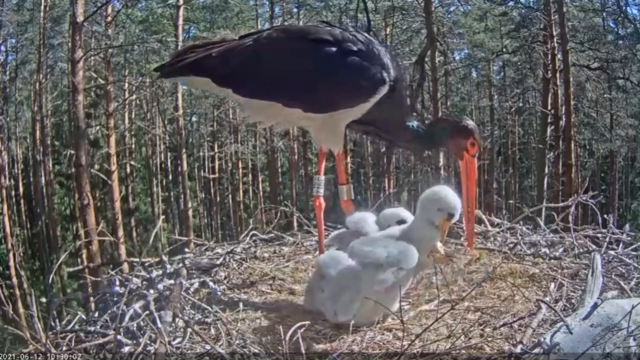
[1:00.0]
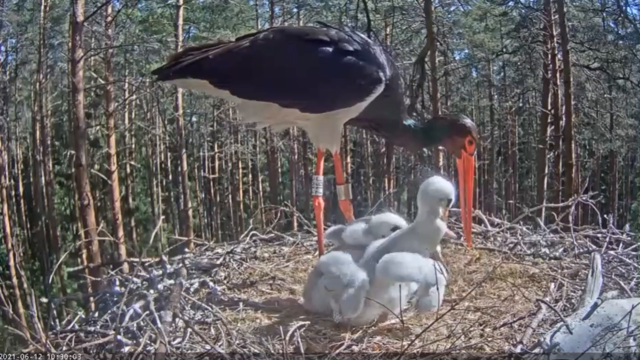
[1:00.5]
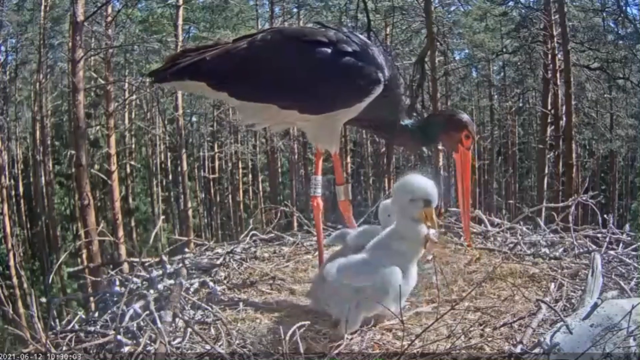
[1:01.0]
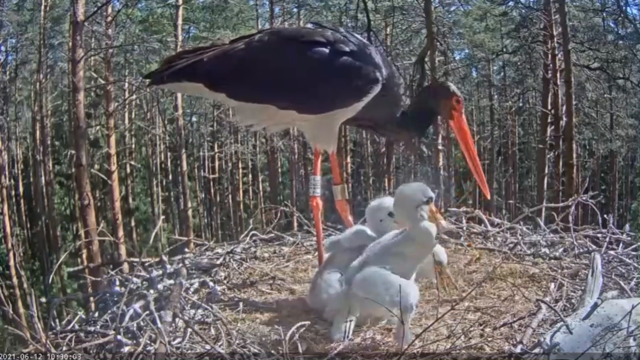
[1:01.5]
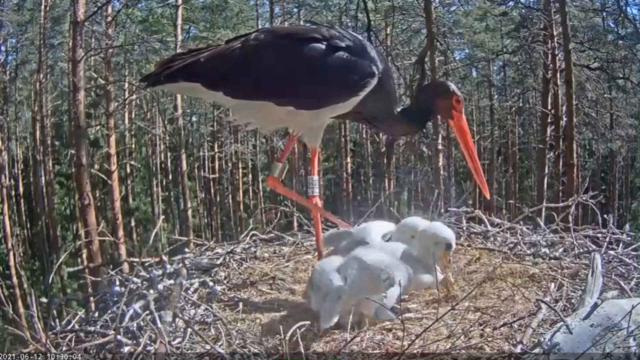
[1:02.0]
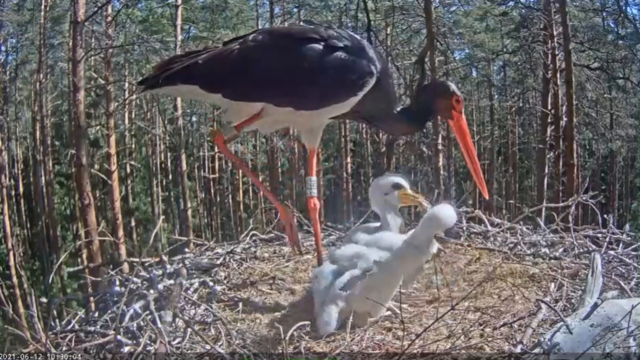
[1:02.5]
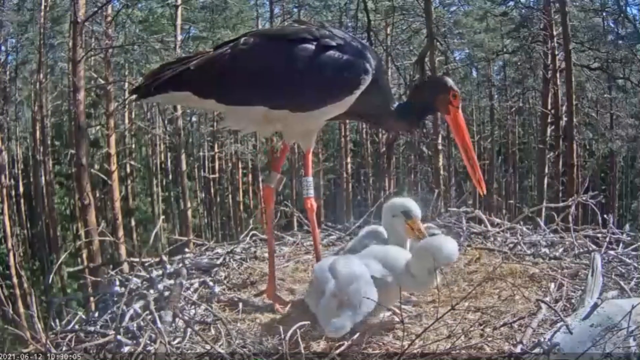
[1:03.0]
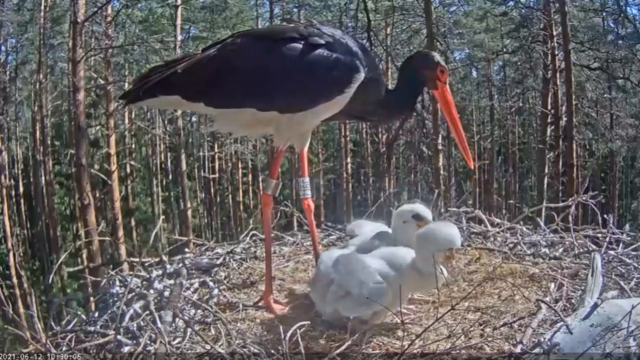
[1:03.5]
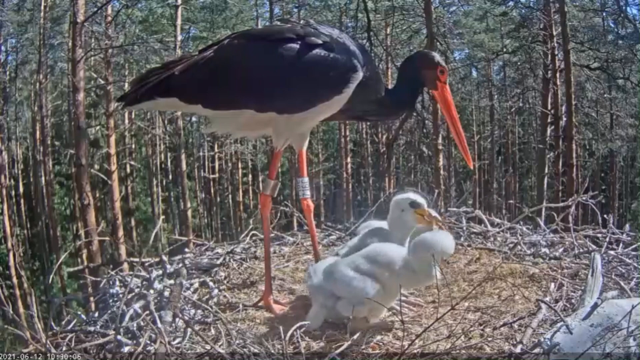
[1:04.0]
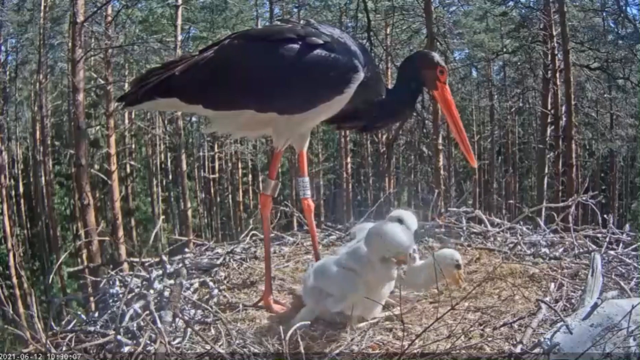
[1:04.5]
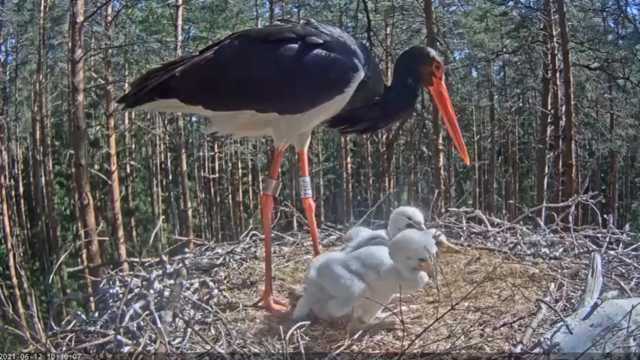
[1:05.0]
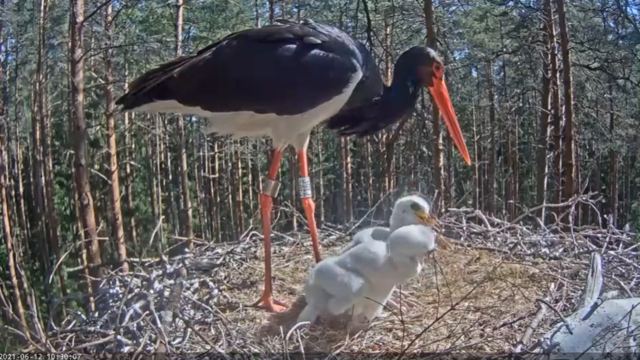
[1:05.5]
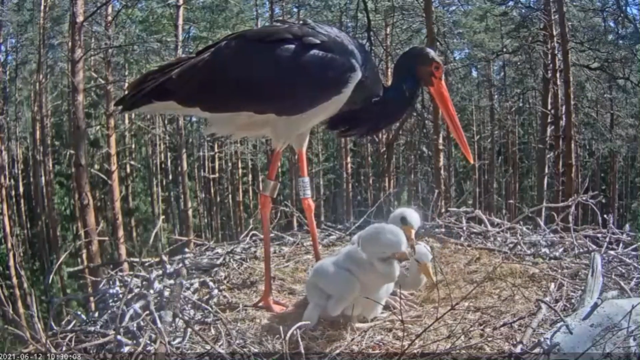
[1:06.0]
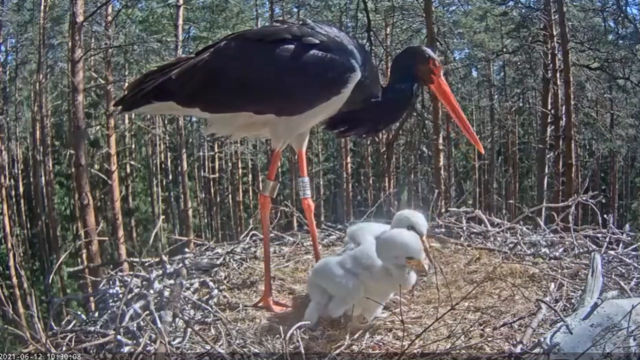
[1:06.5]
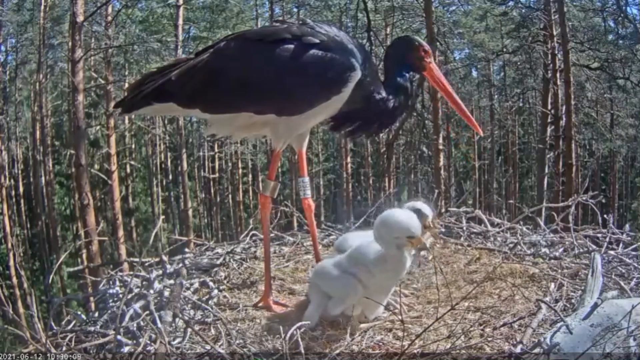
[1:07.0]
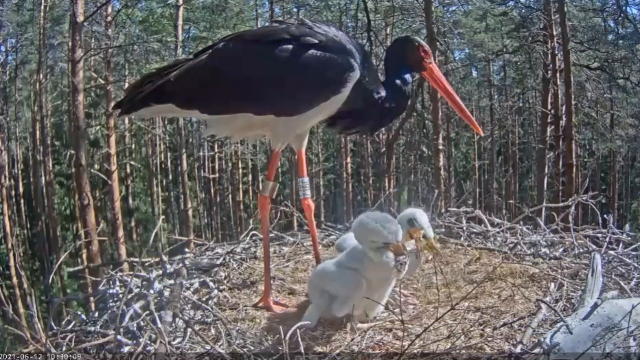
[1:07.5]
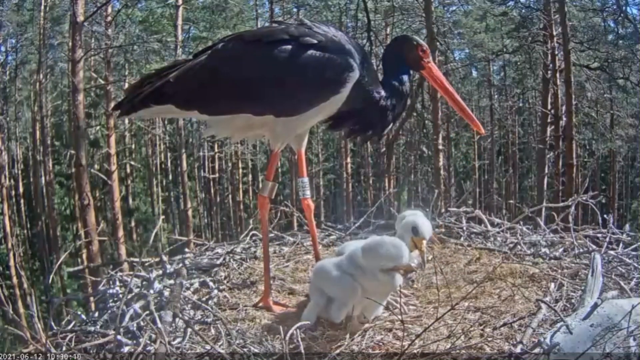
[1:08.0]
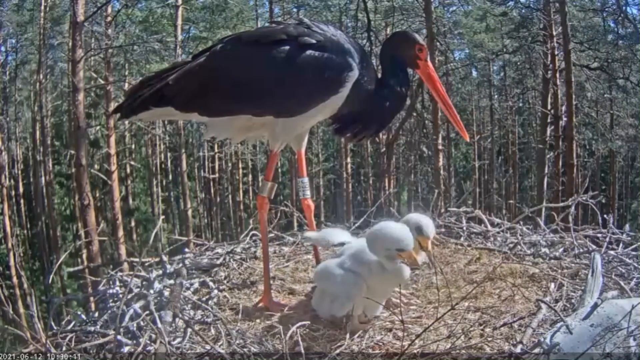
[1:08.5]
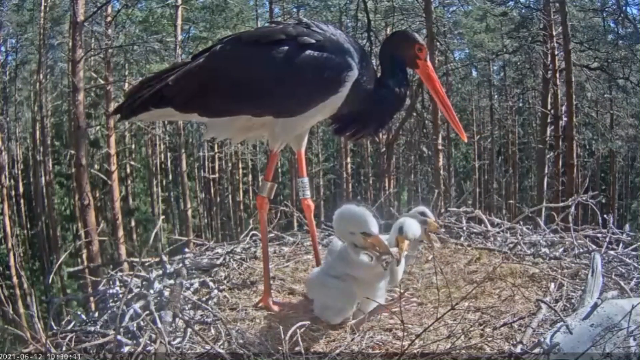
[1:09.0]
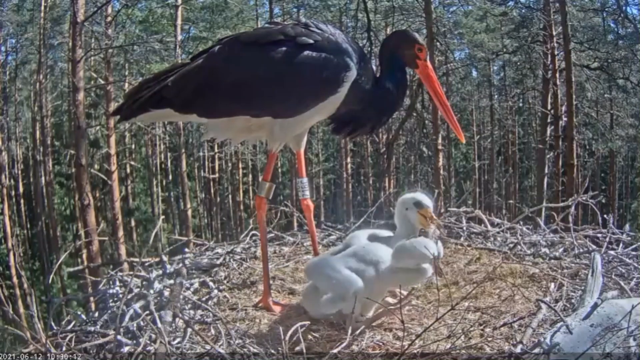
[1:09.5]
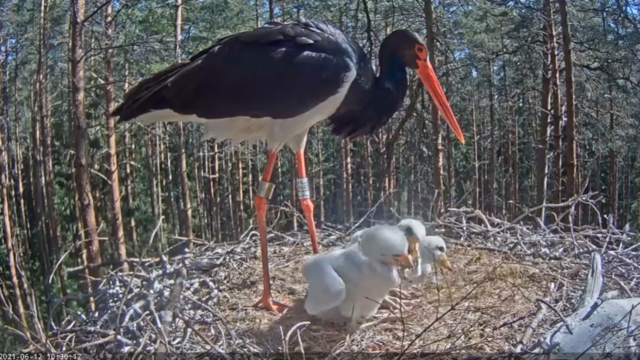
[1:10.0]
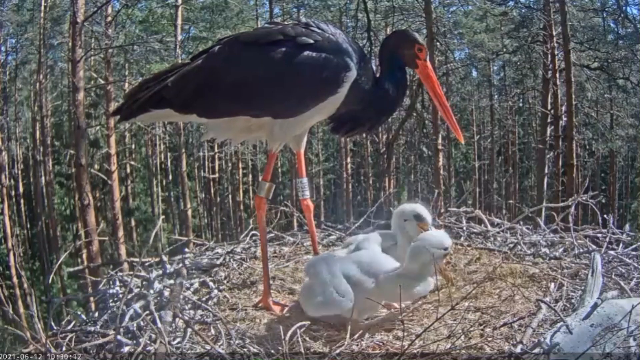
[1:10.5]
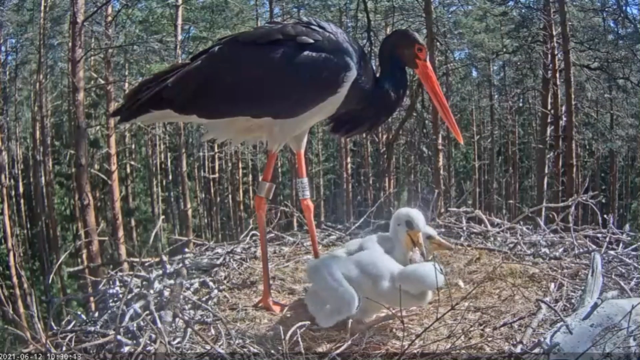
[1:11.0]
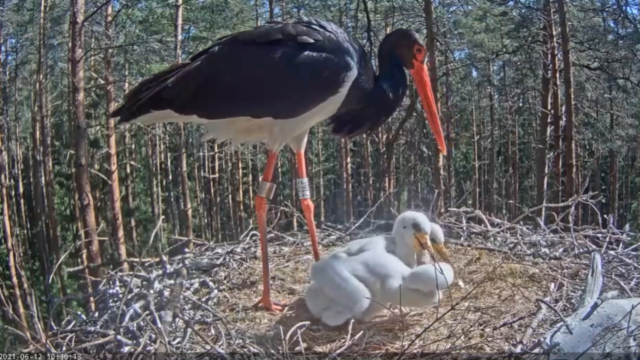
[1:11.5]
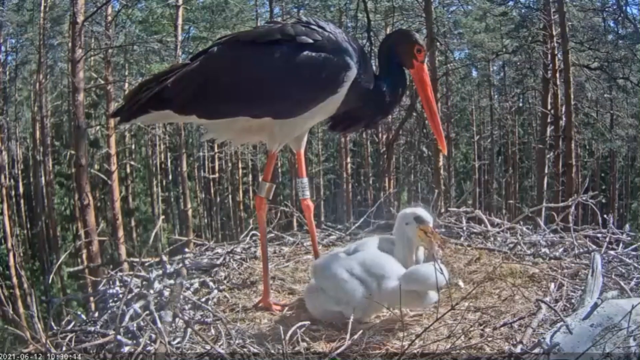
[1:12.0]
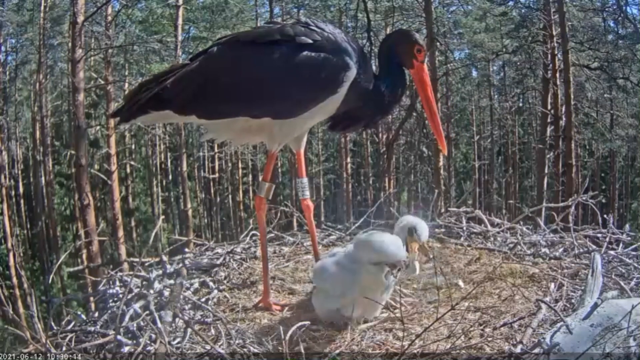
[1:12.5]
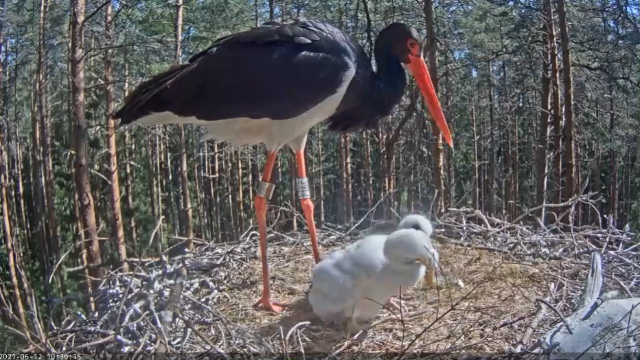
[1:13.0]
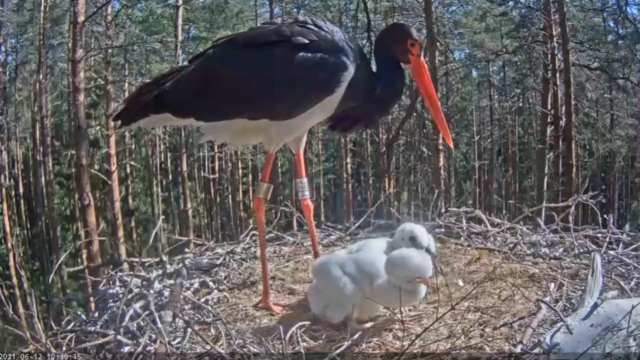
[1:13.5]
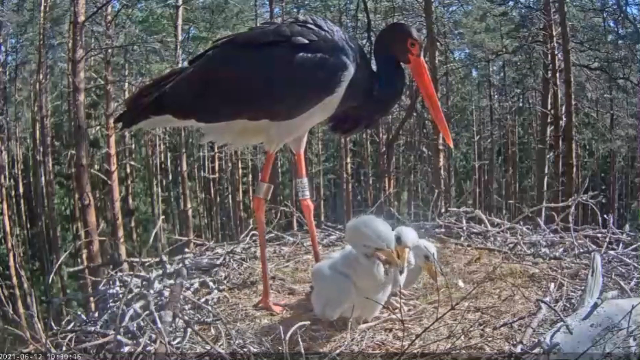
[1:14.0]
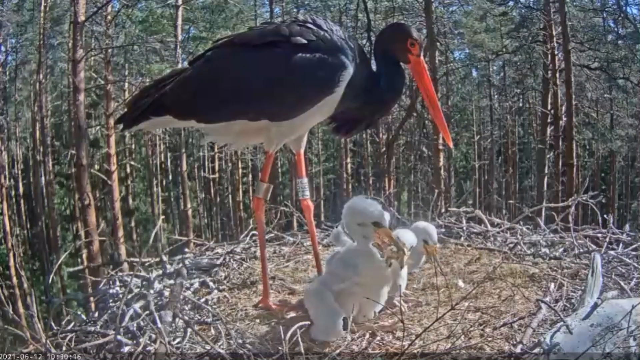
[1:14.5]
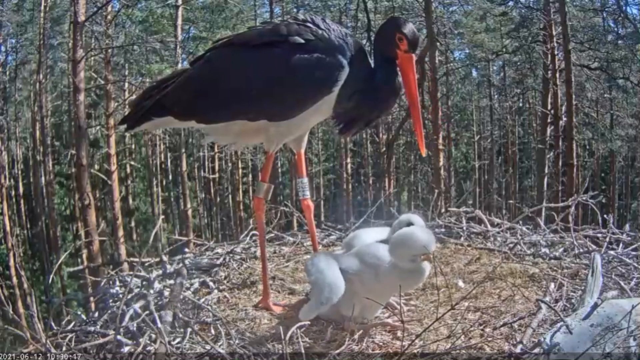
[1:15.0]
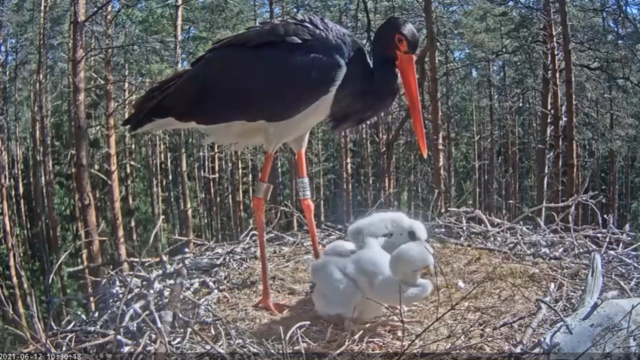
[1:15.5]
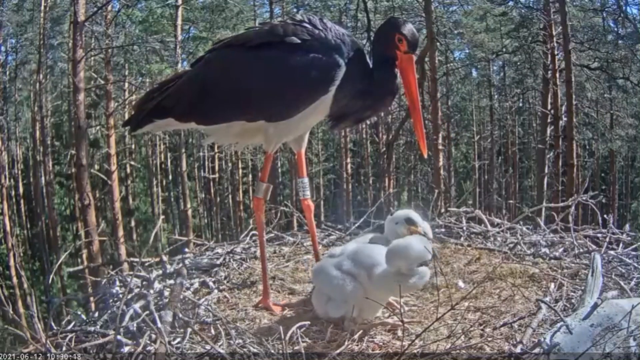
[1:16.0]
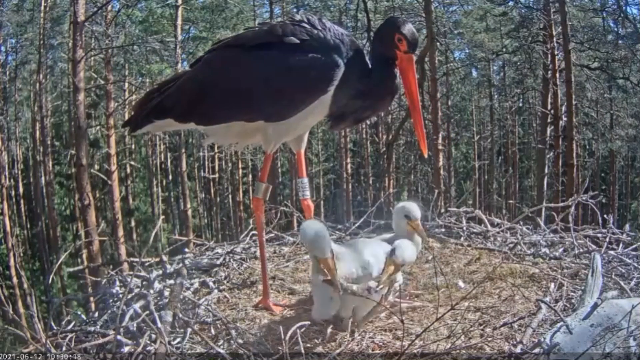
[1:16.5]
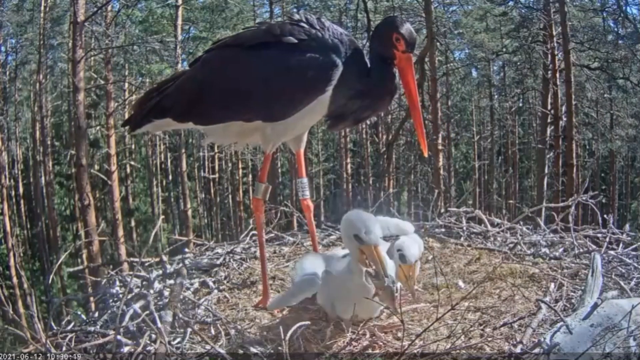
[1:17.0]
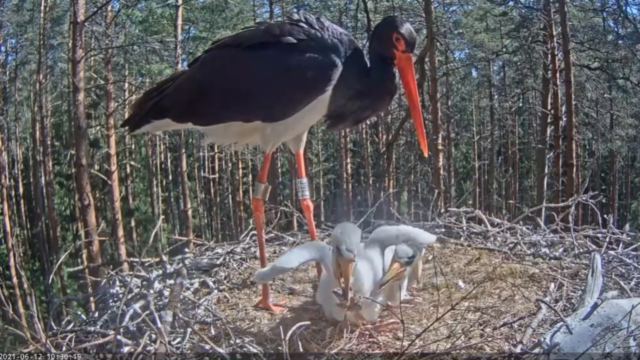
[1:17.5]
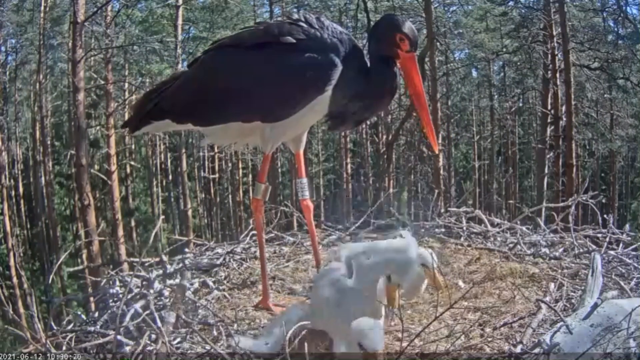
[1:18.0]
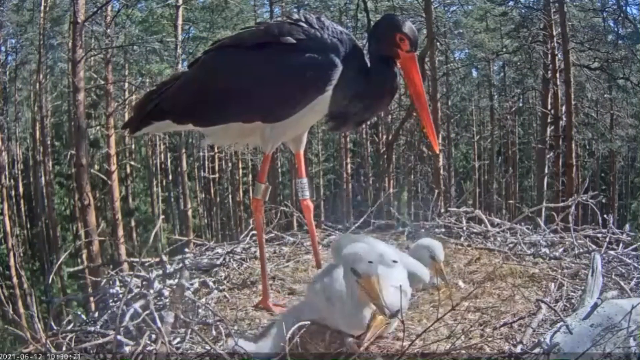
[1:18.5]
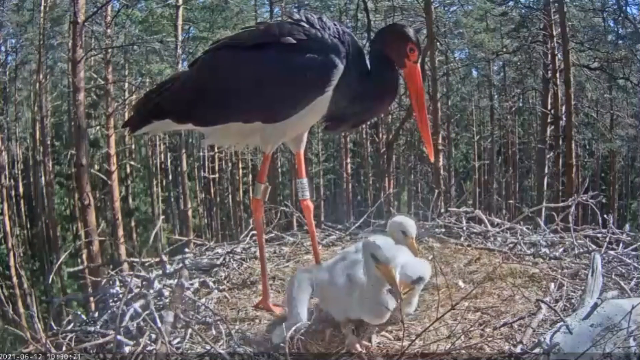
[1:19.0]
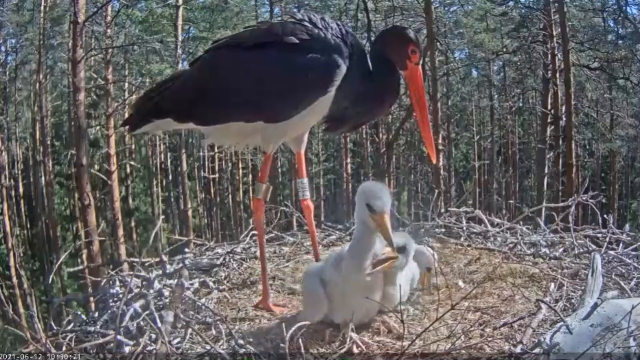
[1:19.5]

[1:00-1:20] A mother bird tends to her baby birds in a nest built of twigs in a foresty area. The three baby birds are white and fluffy. The mother appears to have puked up some regurgitated food for the babies, who seem to fight over it, going after it with their beaks and pushing on each other, while the mother seems to watch in the background. The mother looks like a crane, with a very long, skinny, pointed reddish-orange beak and very skinny legs of the same matching color. The babies are fluffy white with yellow beaks, and all of the birds have black eyes. The setting is a foresty green area with a blue sky in the background.